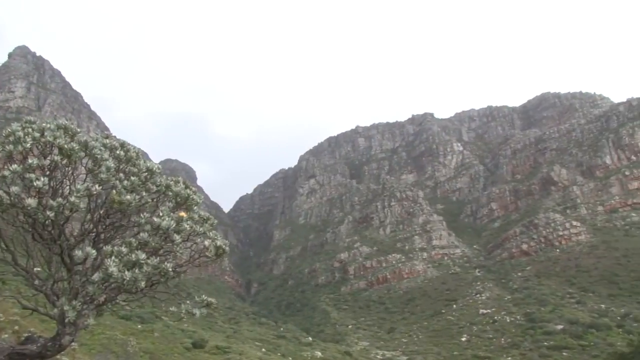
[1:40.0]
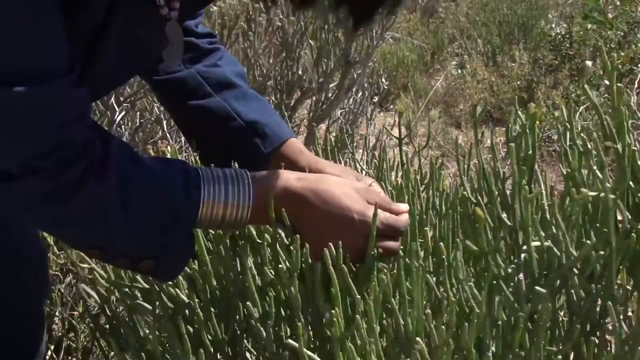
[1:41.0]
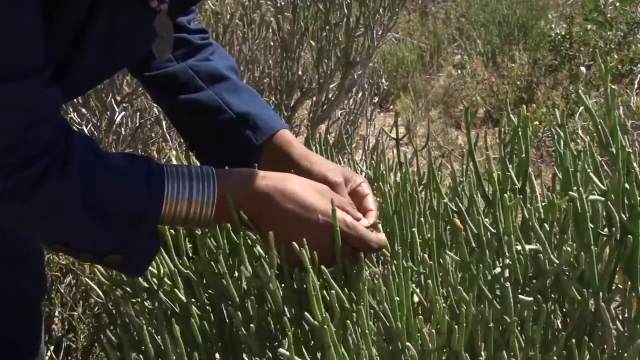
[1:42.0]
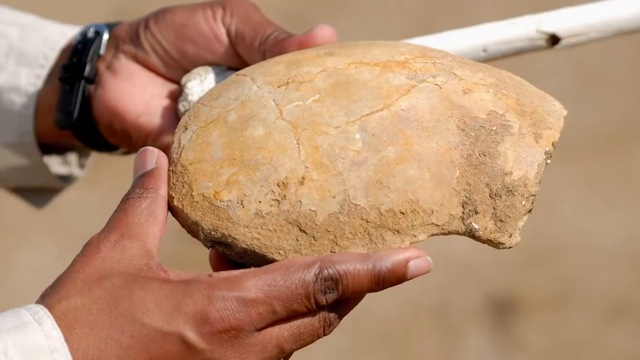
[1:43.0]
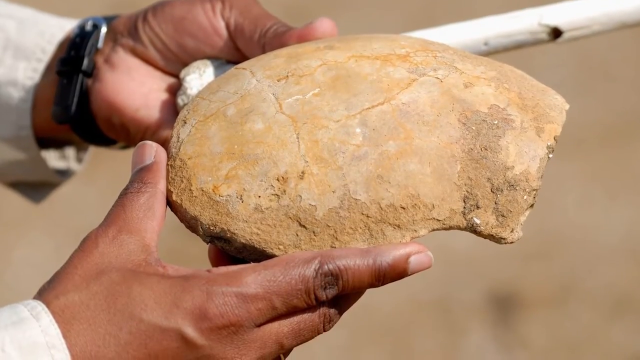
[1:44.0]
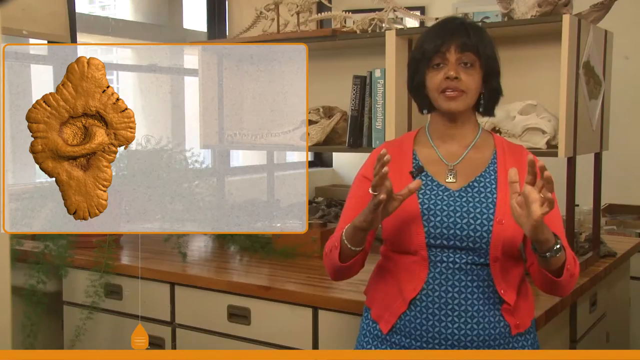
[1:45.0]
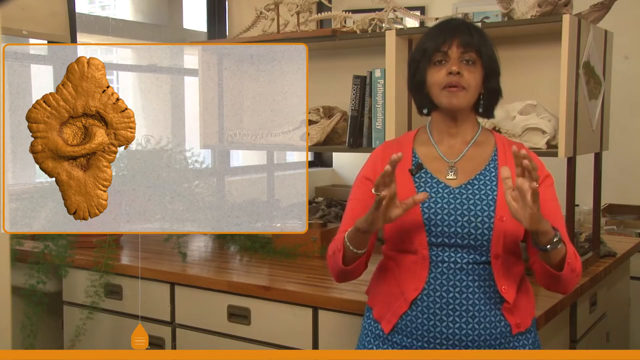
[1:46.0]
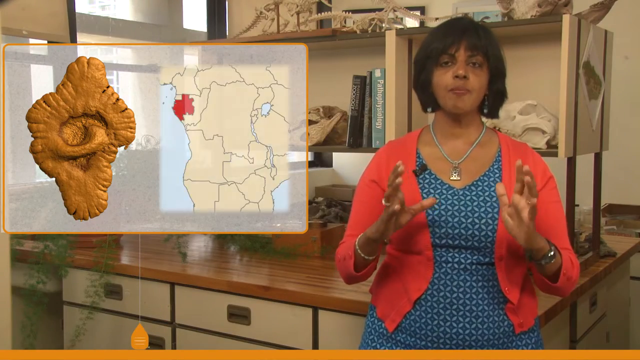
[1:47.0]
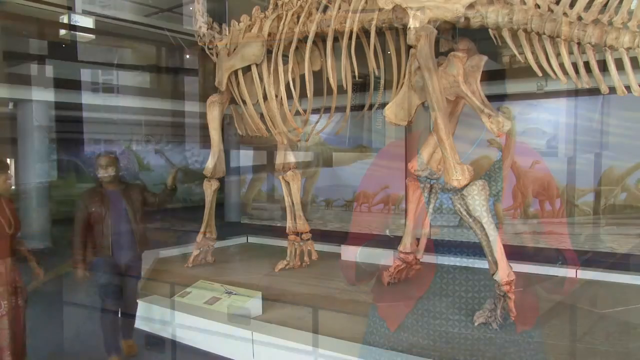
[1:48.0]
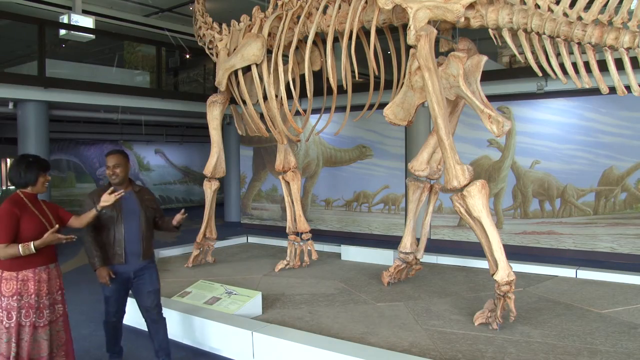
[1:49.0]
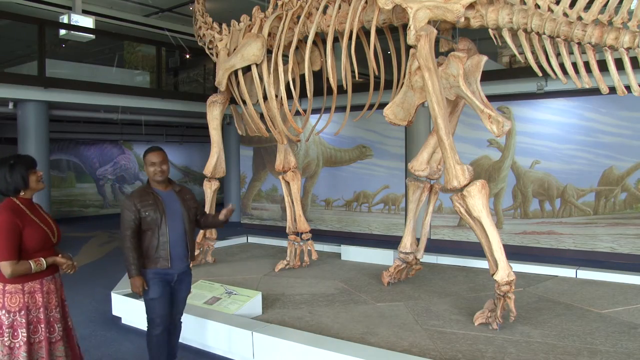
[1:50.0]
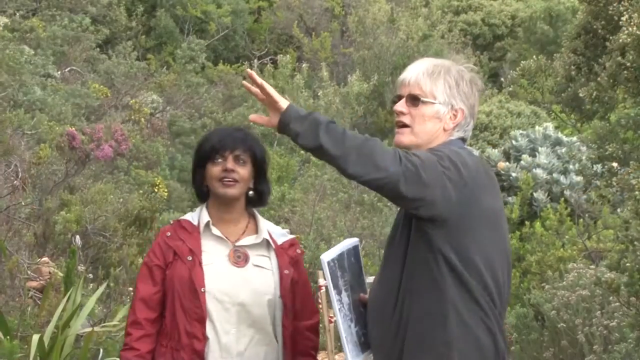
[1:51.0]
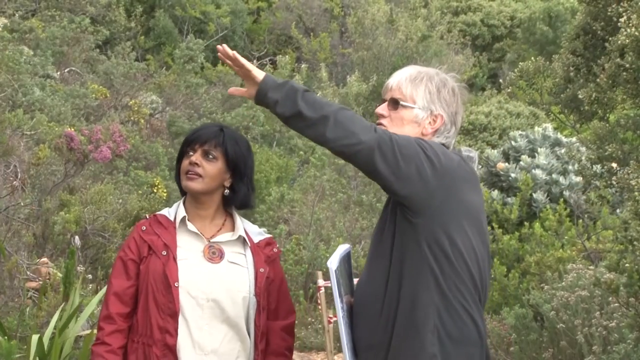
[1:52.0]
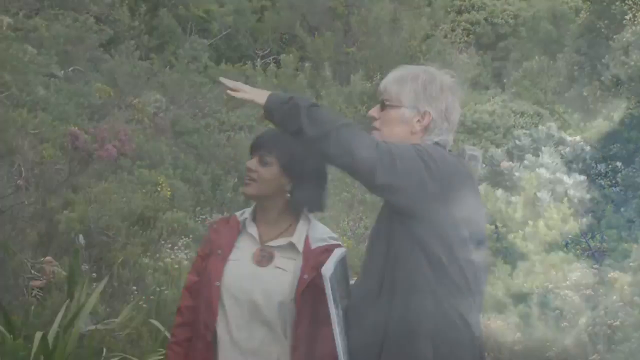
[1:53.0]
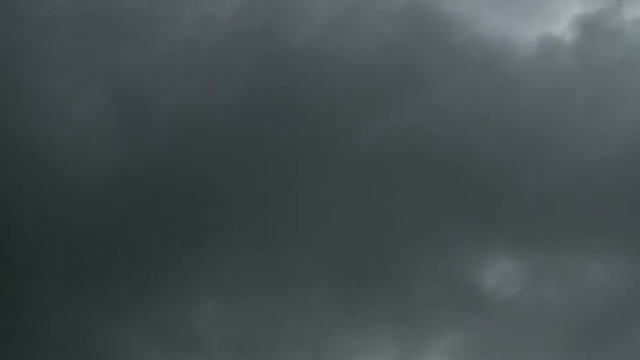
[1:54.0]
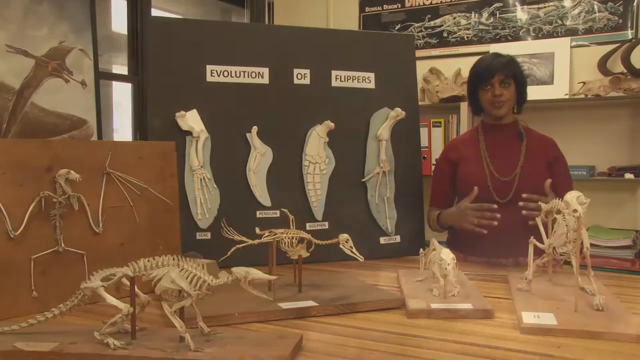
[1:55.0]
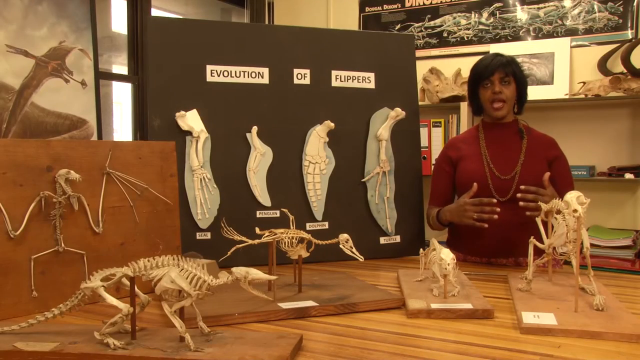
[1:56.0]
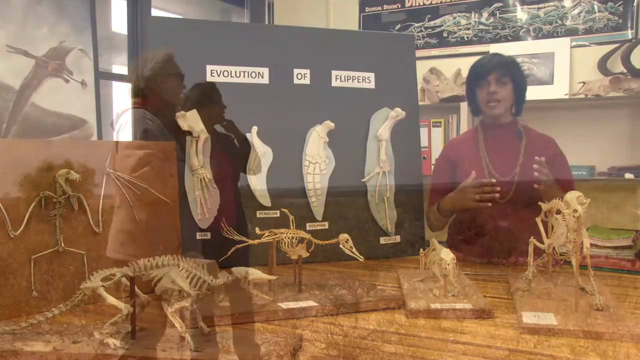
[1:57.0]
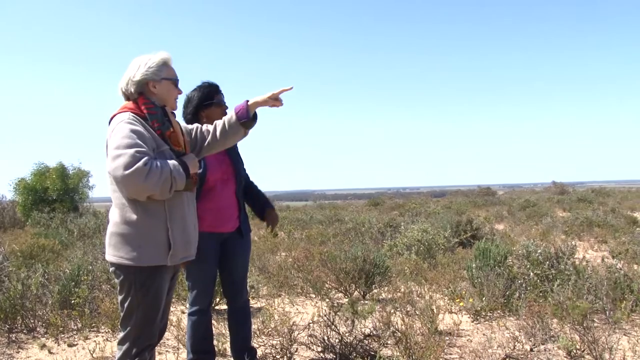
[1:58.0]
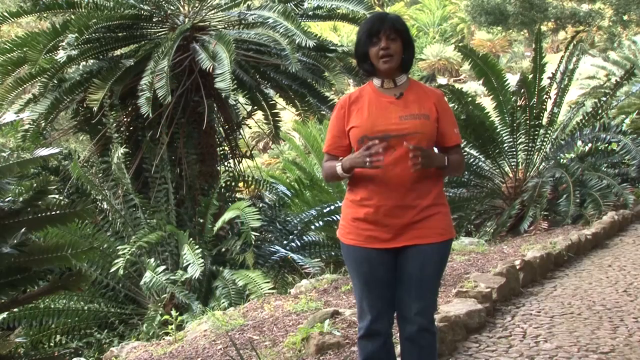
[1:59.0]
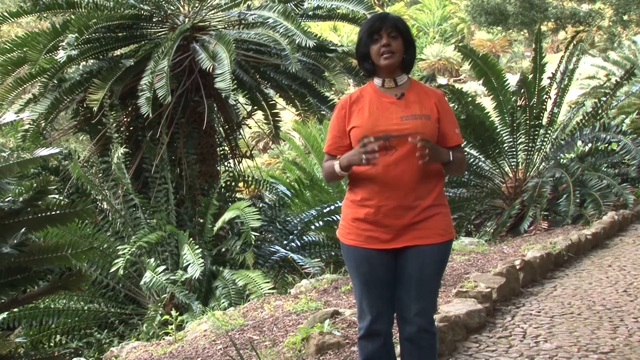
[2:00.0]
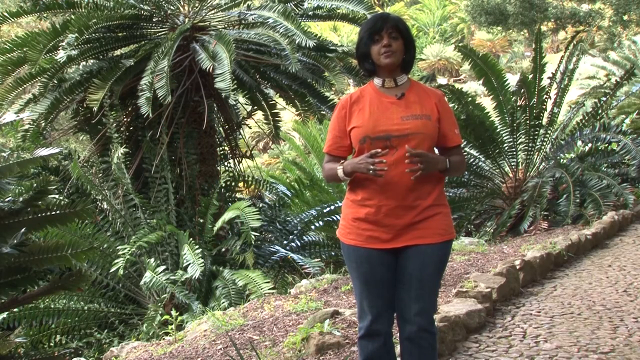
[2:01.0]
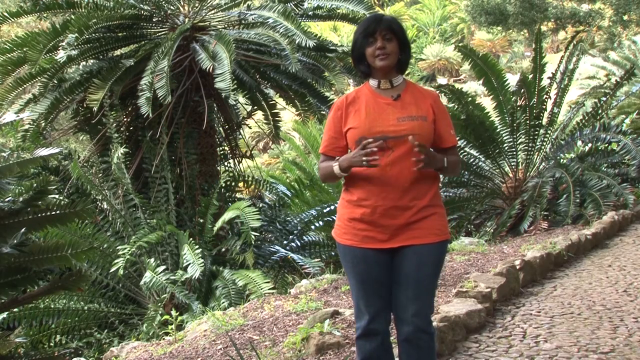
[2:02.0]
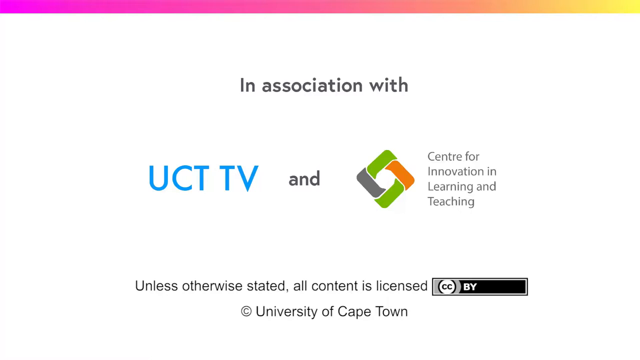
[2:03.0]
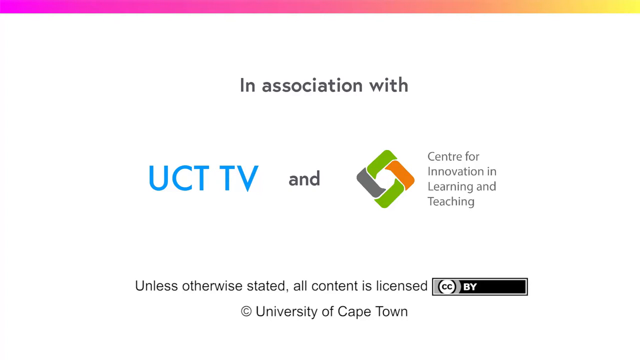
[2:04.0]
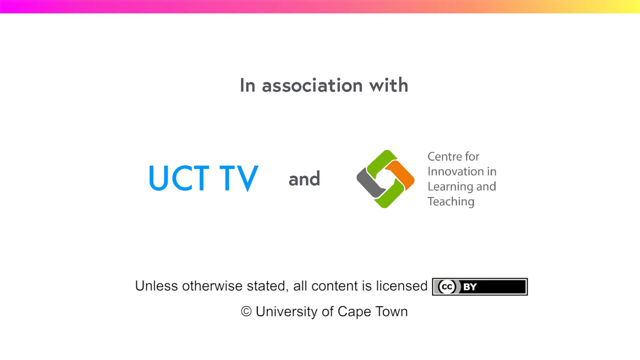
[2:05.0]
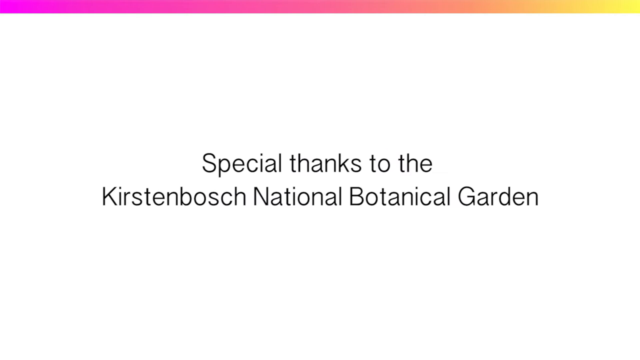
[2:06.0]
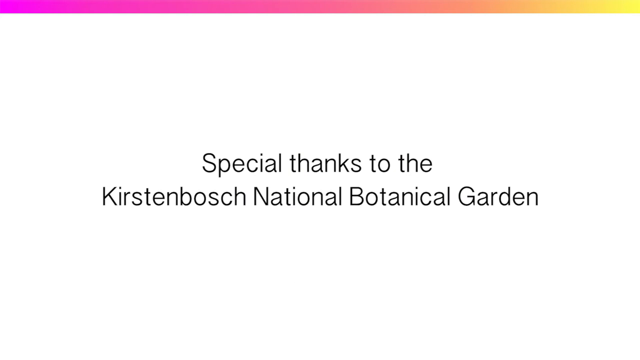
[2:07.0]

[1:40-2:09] A smoky, hazy-looking cliffside is shown, followed by a close-up of a person's hands as they kneel down and handle some green, reedy plants. Another slide shows someone holding something that almost appears to be part of a skull, or some sort of bone or fossil-like material, with cracks on it. The doctor is then shown again, leaning against kind of a desk area with fossils and bones behind her, gesturing with her hands. A slide shows kind of a fossil in the upper left against a light gray background. The doctor and a man then walk up toward kind of a dinosaur bone setup in a museum-like setting, with an illustrated diorama of various dinosaurs behind and to the left. The man gestures with his hand to his left. Finally, a couple of people outdoors look at things, supposedly plants or the land.